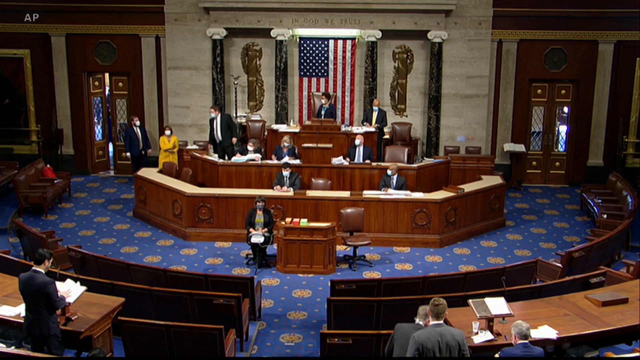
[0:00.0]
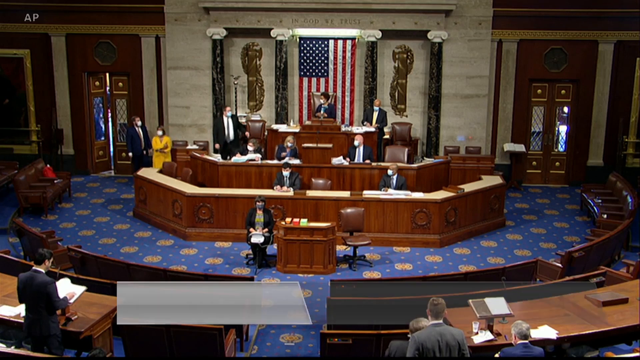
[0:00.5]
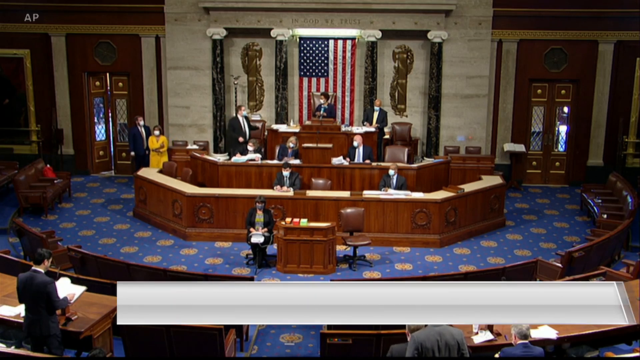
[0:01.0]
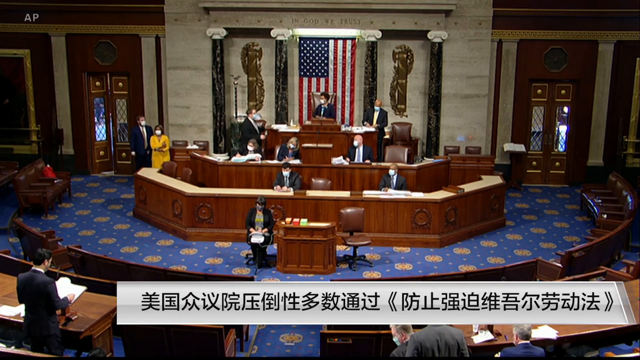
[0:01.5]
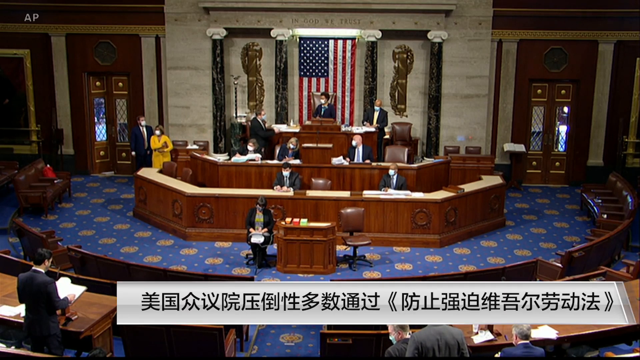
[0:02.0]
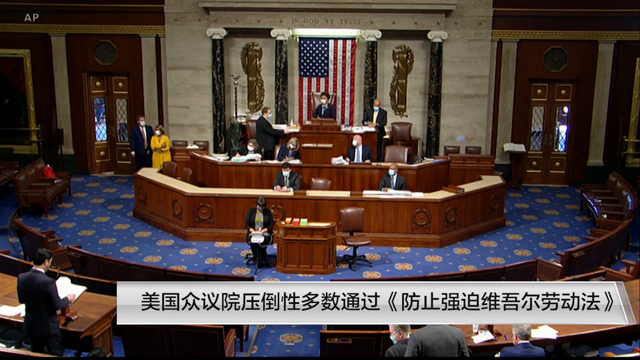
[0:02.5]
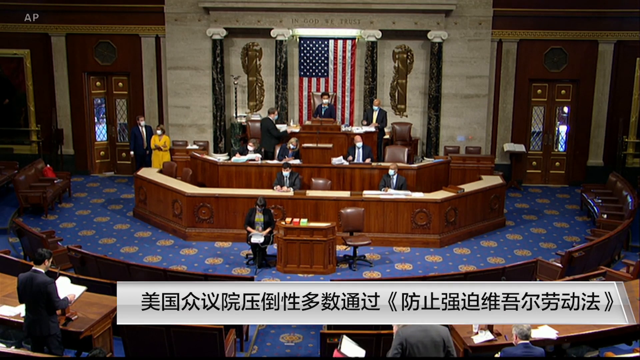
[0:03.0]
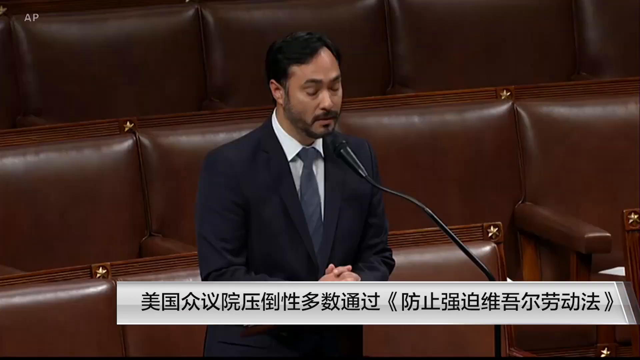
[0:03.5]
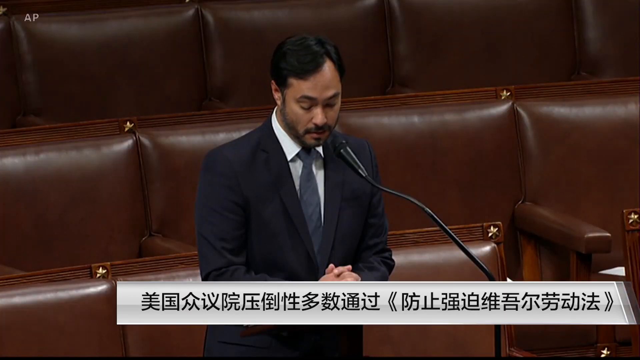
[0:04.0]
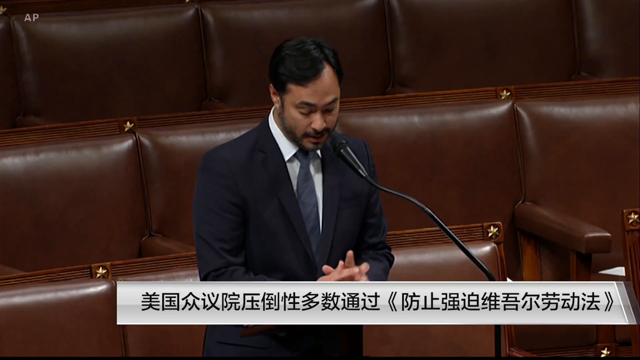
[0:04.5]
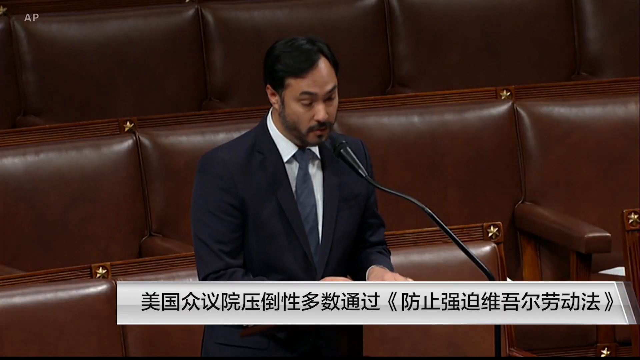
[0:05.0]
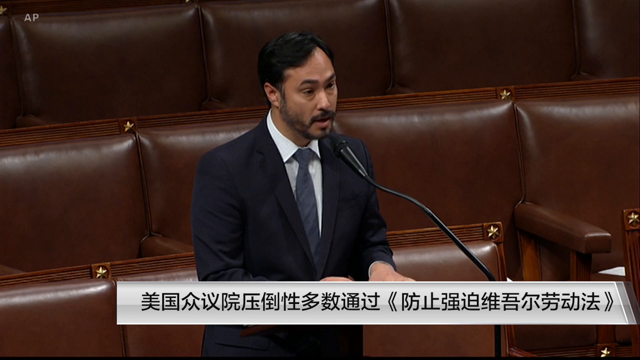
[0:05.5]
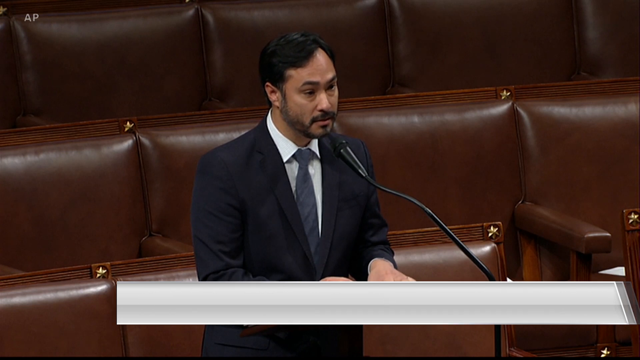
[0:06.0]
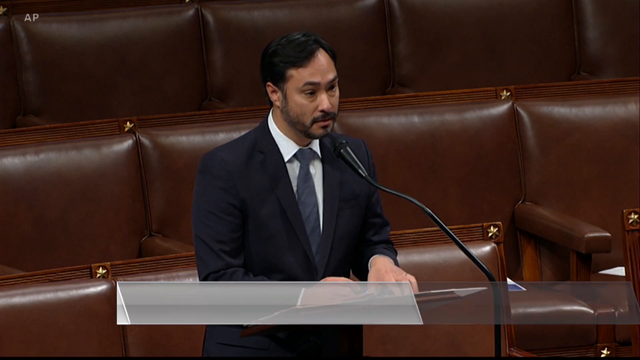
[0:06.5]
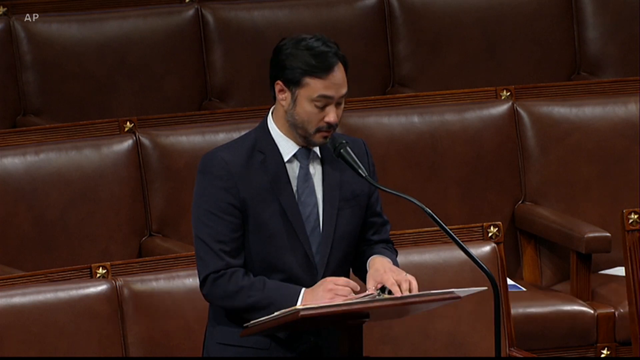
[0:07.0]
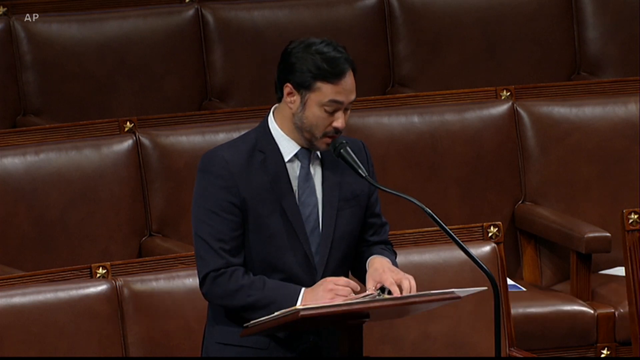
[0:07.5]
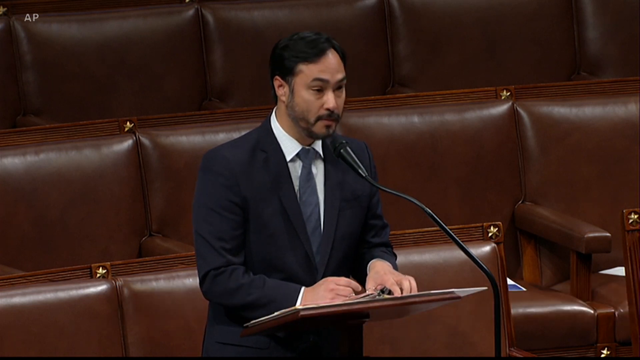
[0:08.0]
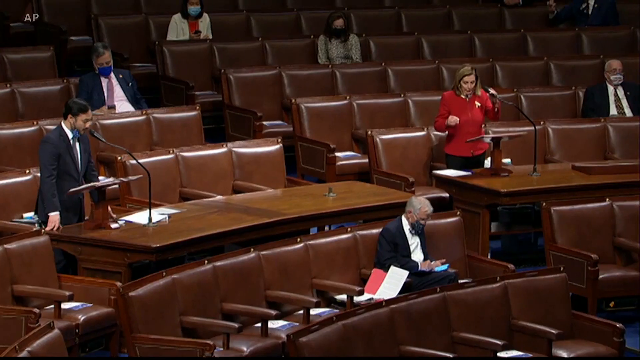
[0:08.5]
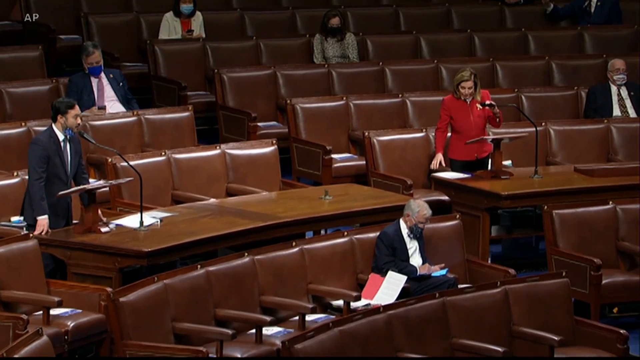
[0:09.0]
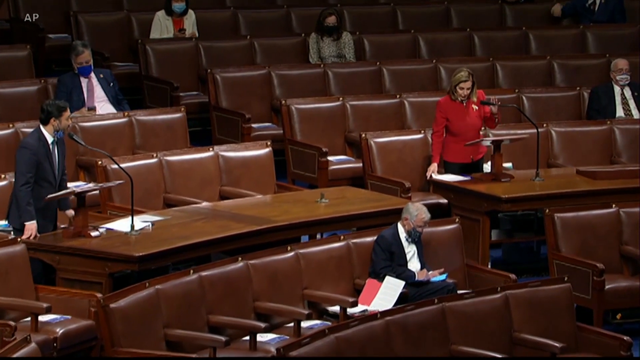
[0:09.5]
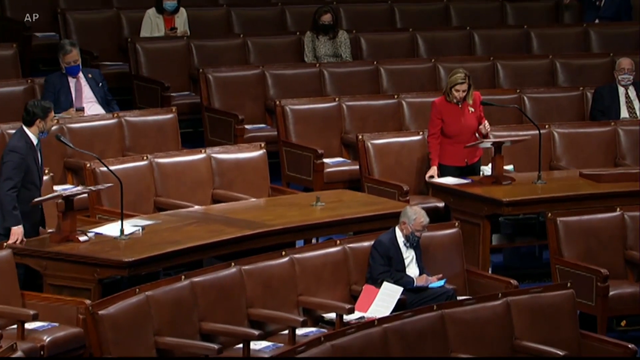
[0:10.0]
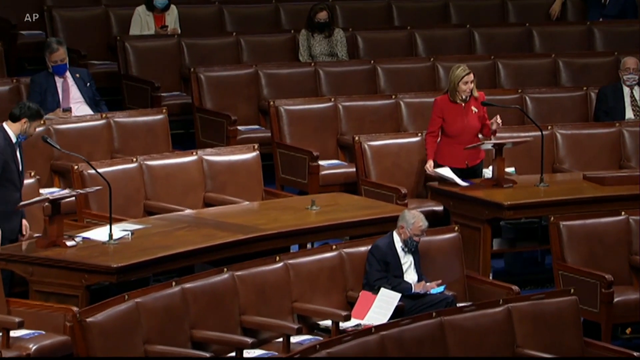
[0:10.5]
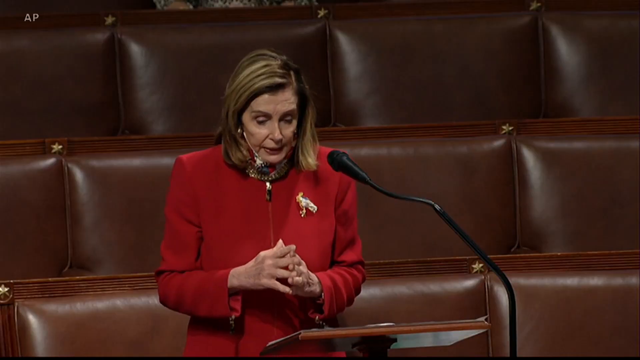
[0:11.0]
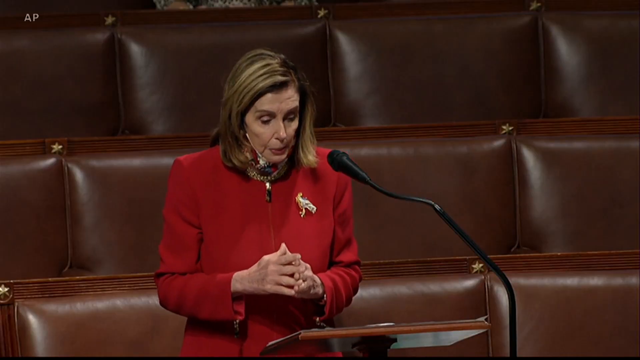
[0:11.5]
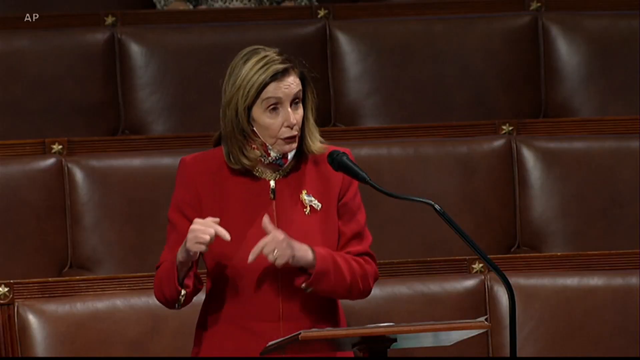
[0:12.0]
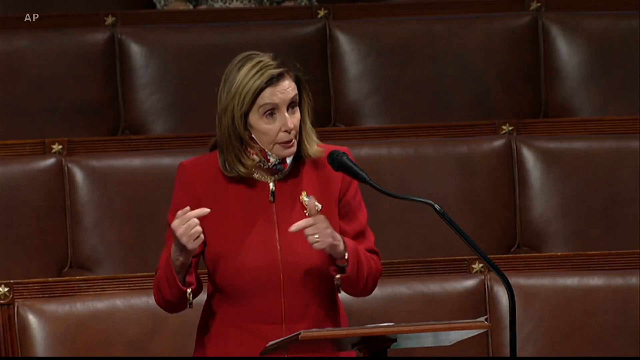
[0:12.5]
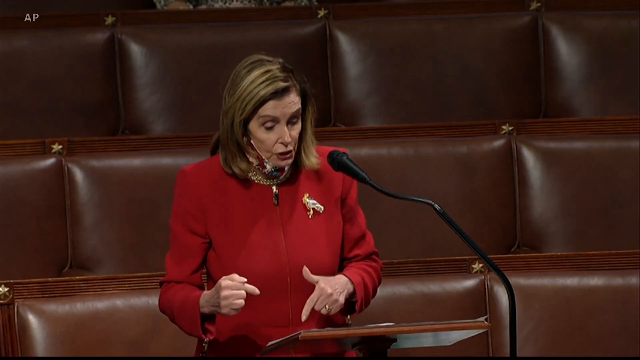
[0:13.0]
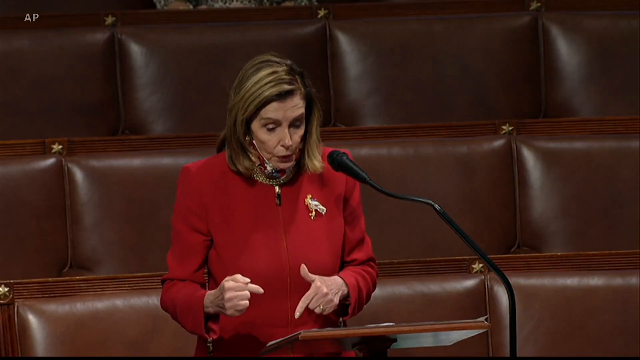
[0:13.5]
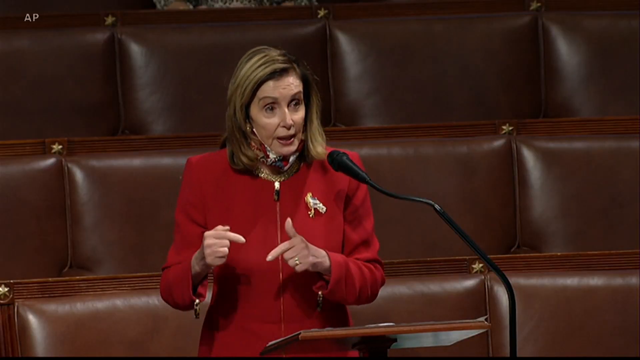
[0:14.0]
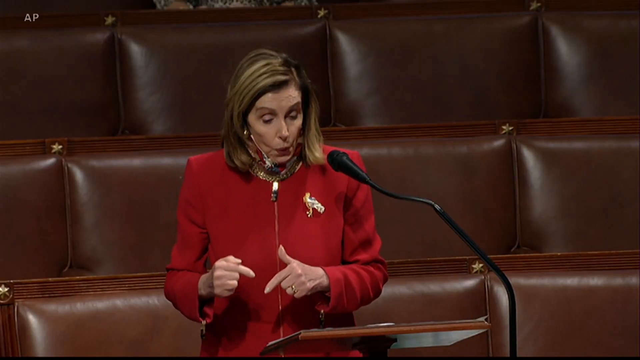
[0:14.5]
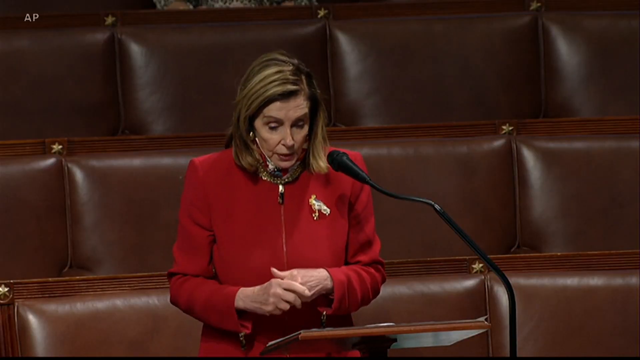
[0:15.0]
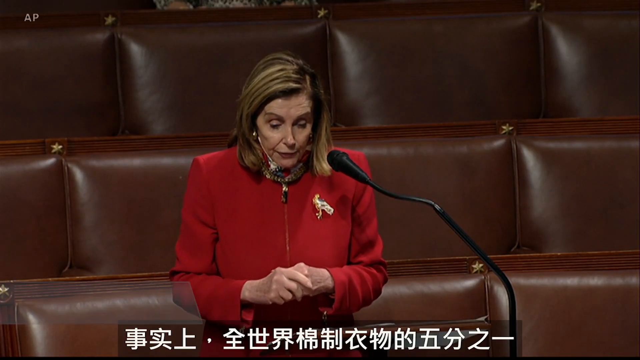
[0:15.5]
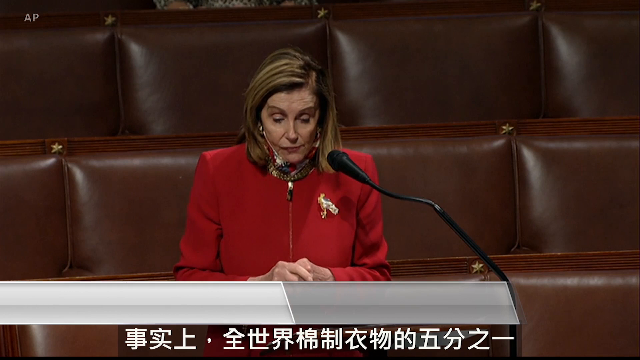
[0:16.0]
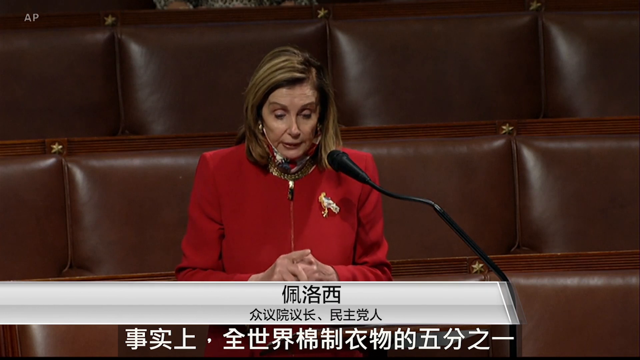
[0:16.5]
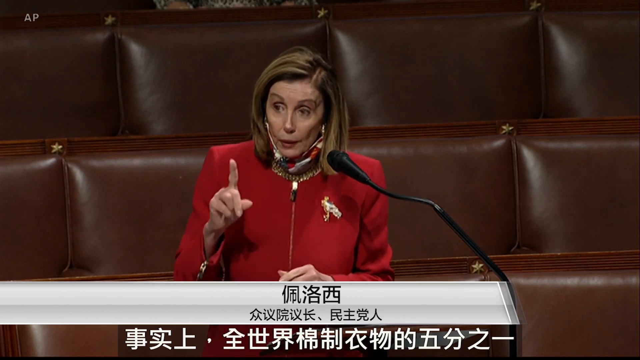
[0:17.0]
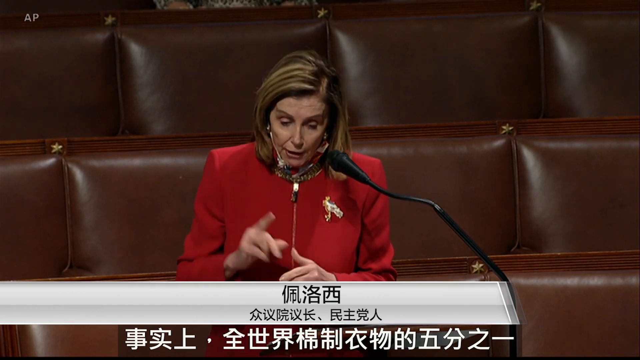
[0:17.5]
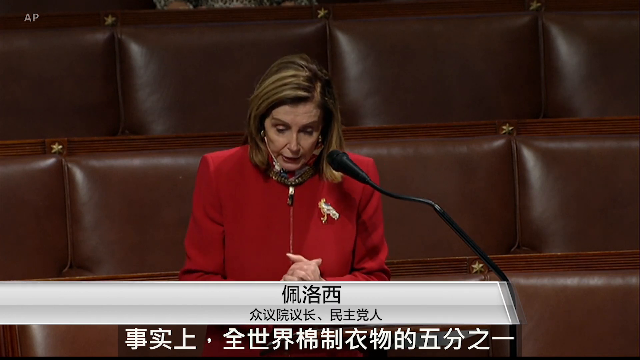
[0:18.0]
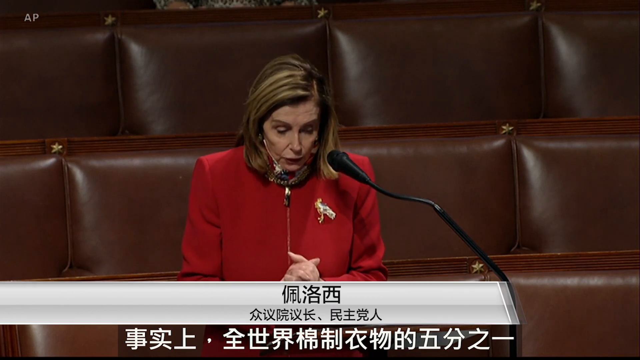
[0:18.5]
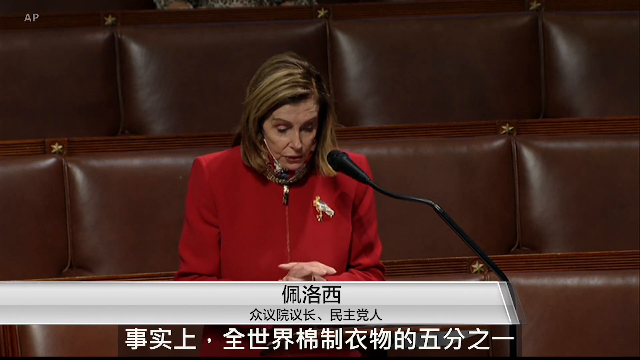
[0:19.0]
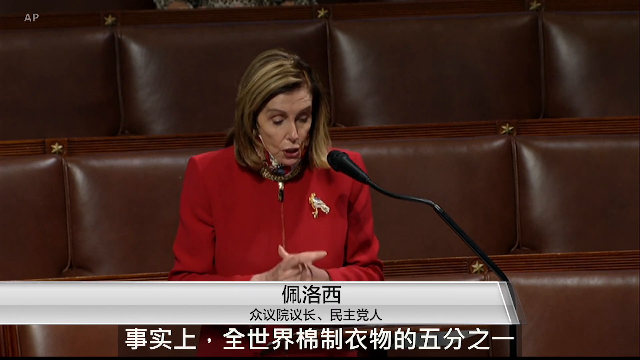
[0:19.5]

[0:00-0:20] The scene appears to be the Supreme Court room, with a judge and other congressmen sitting at the front of the room during a court session. They all wear medical masks, seemingly during the time of Covid. A young male congressman in a black suit stands in the audience section at the podium, asking a question or giving some kind of statement. Text appears at the bottom of the screen, all in Chinese, so this may be some kind of Chinese news report. Nancy Pelosi, also in the audience seats, then stands and speaks into the microphone. Many seats are empty, as the courtroom is mostly empty, possibly due to Covid. There are at least a few seats between each person, and everyone wears a mask, although the people speaking have theirs pulled down.